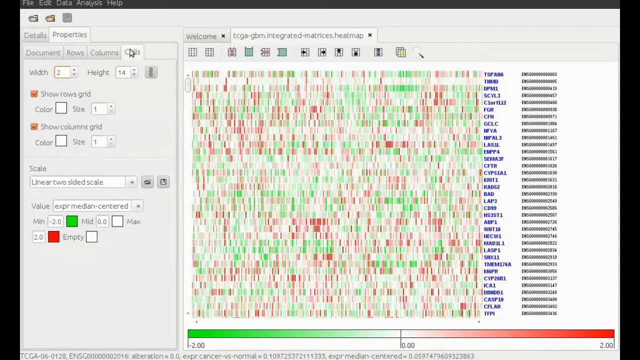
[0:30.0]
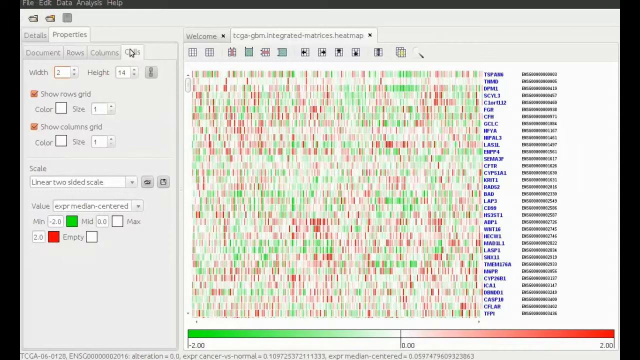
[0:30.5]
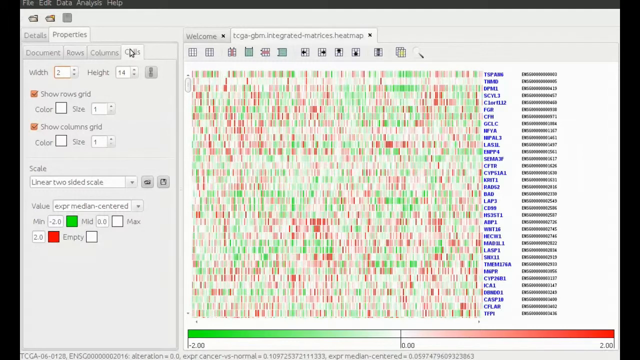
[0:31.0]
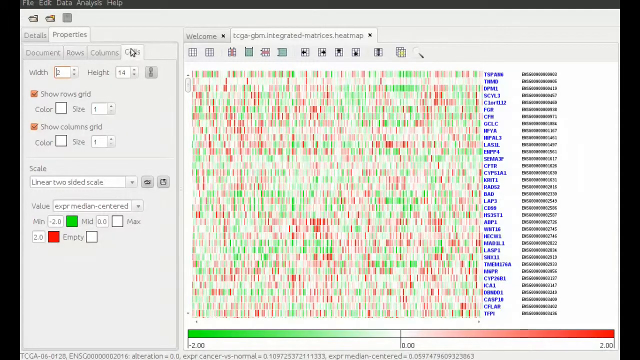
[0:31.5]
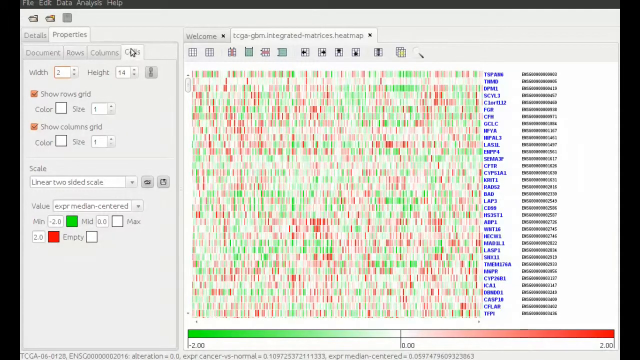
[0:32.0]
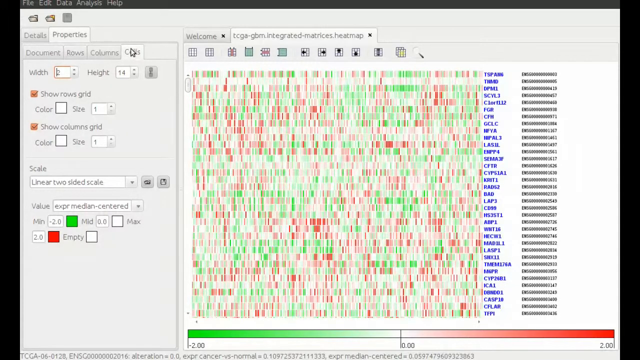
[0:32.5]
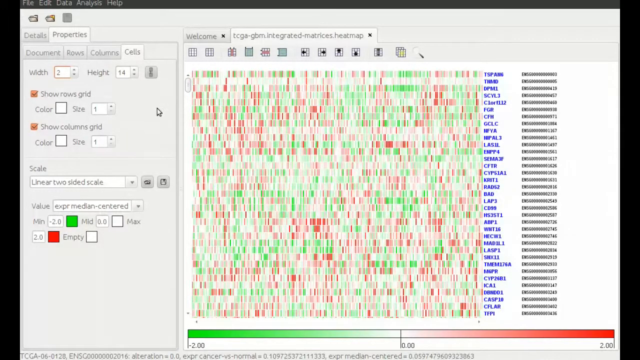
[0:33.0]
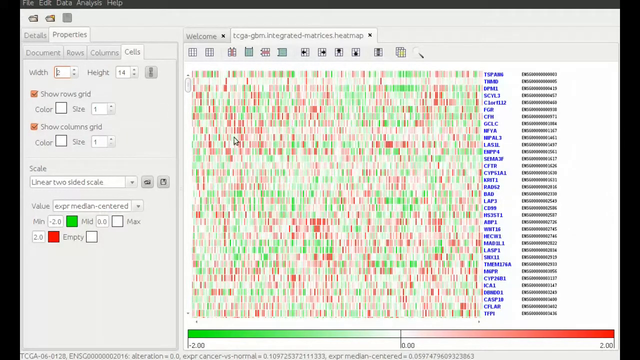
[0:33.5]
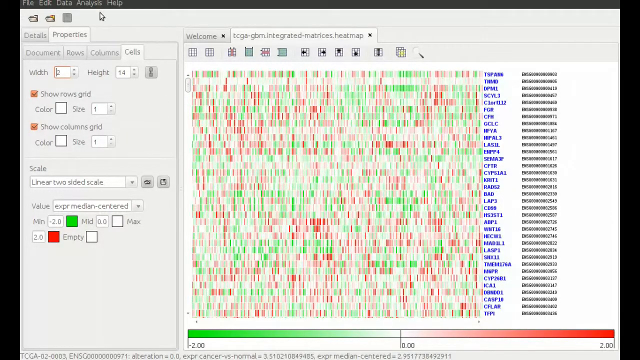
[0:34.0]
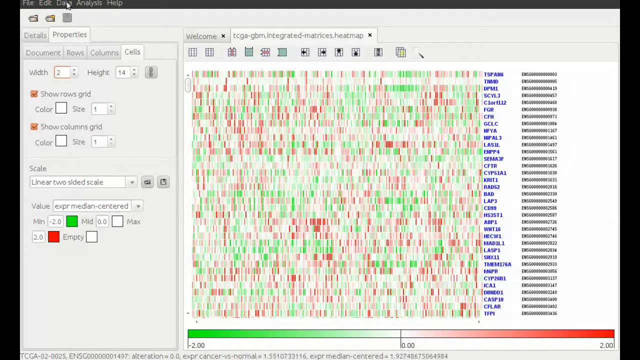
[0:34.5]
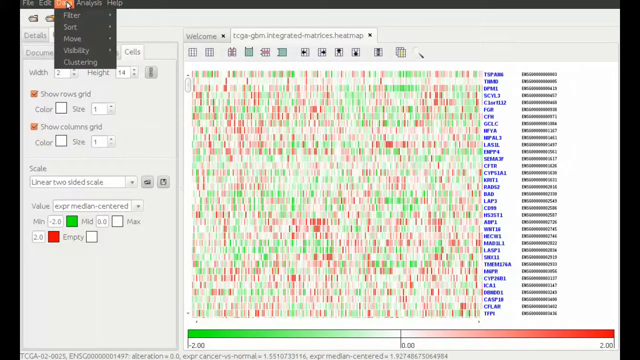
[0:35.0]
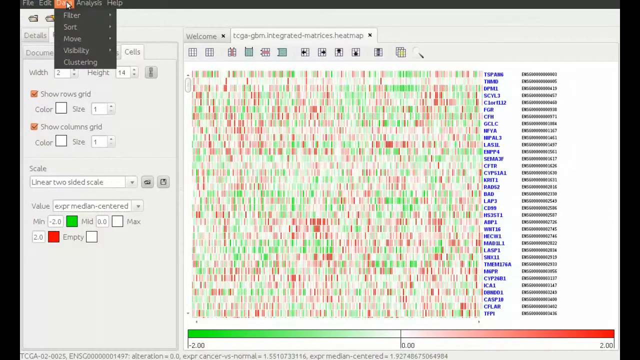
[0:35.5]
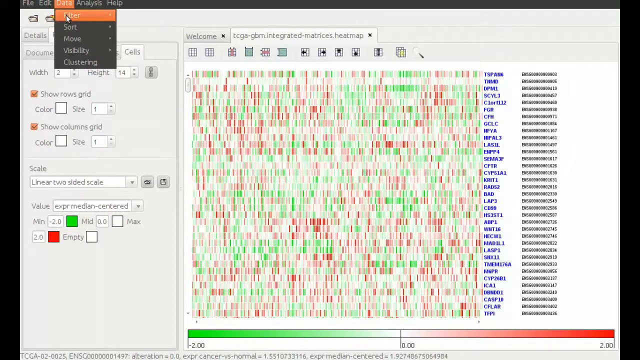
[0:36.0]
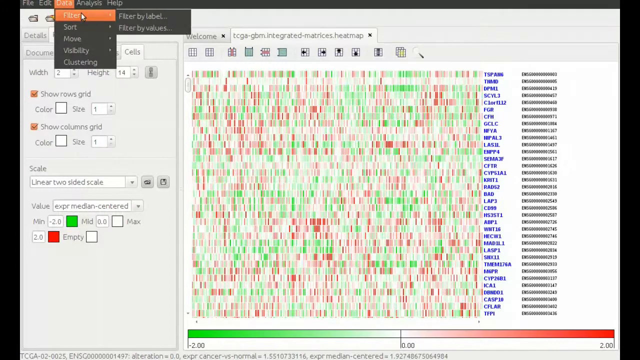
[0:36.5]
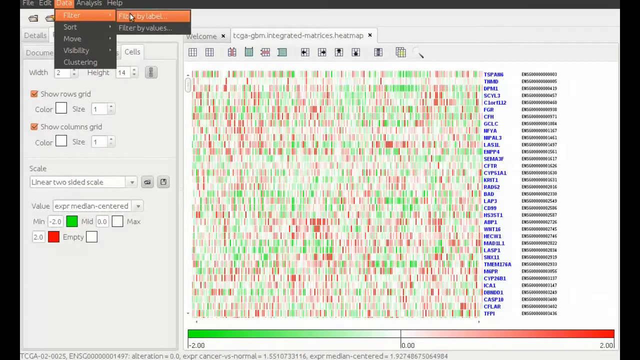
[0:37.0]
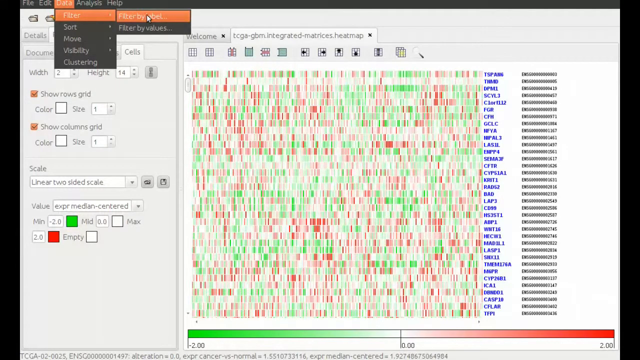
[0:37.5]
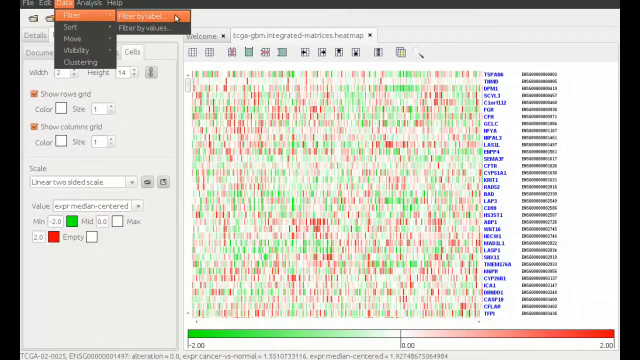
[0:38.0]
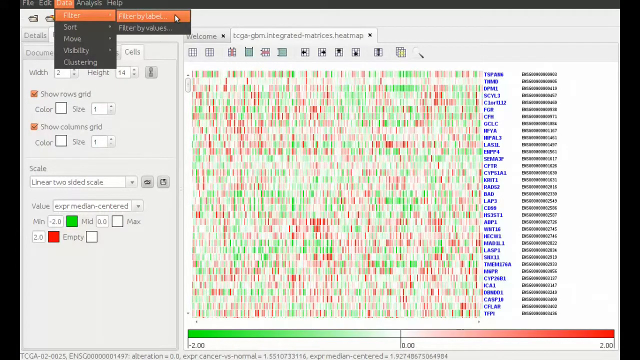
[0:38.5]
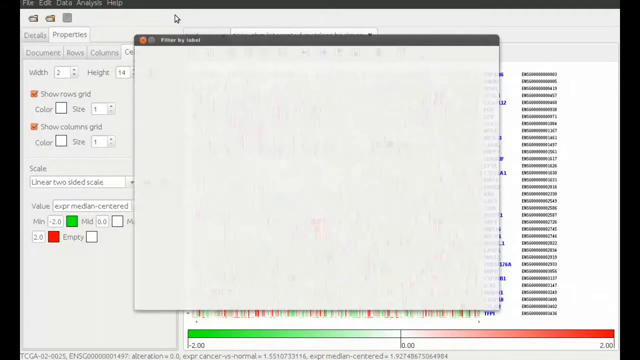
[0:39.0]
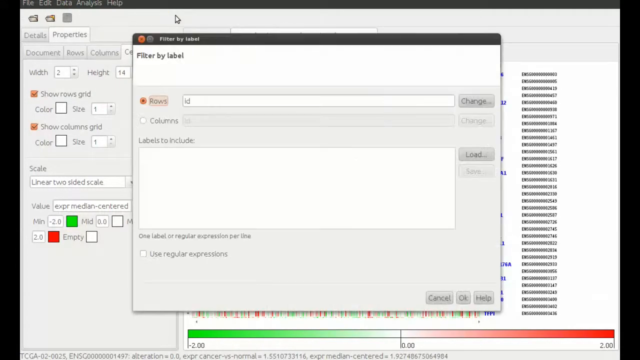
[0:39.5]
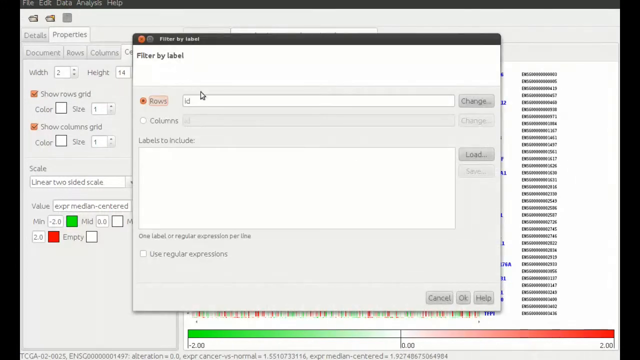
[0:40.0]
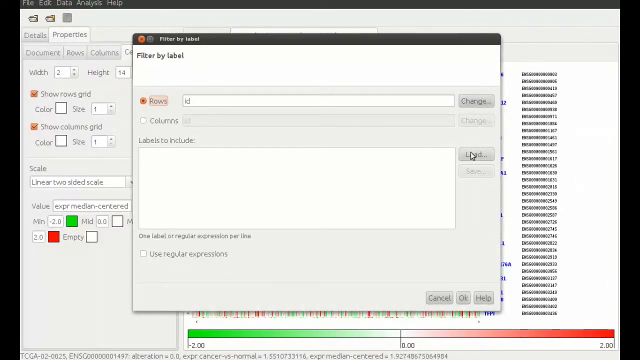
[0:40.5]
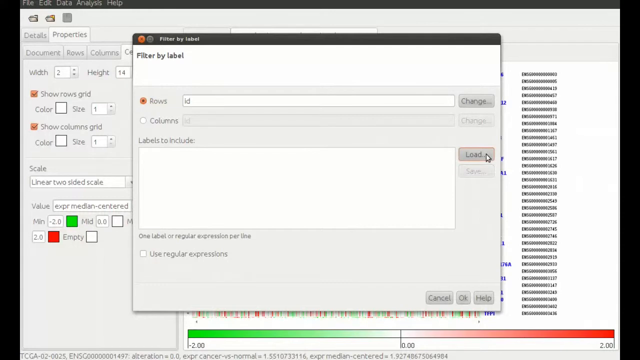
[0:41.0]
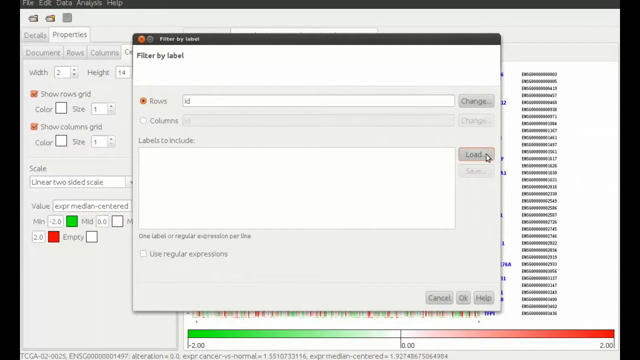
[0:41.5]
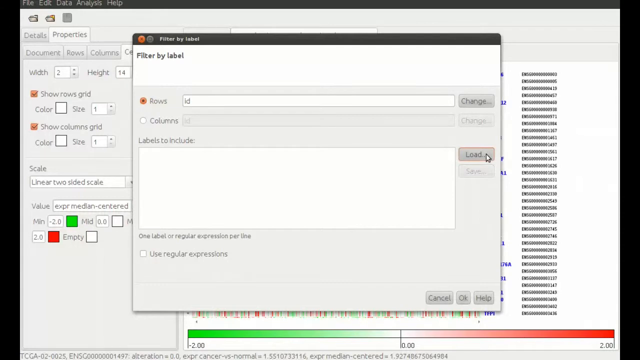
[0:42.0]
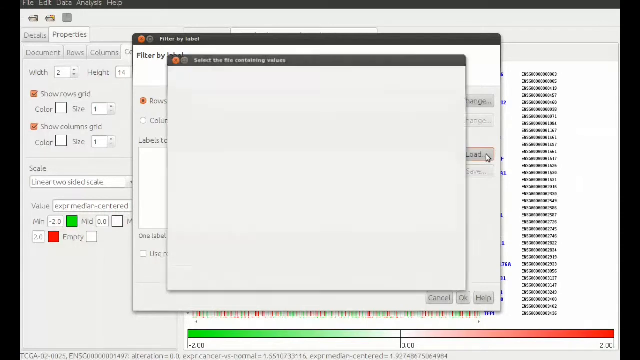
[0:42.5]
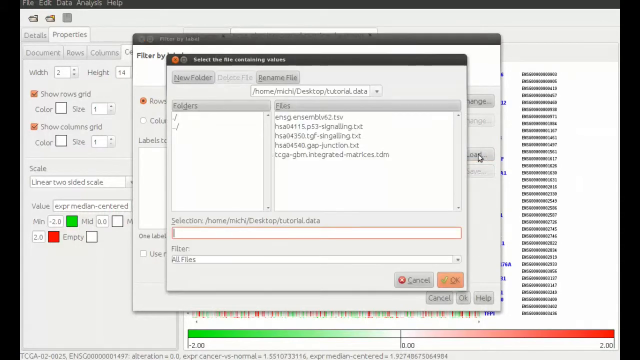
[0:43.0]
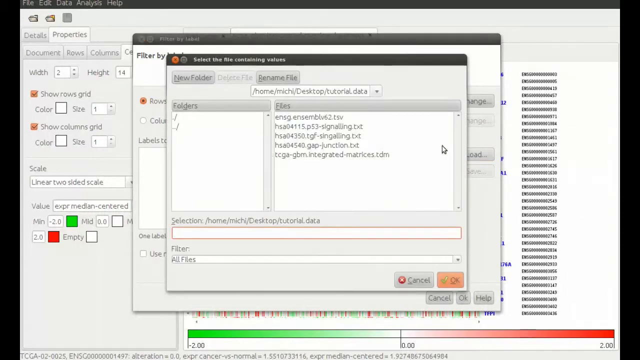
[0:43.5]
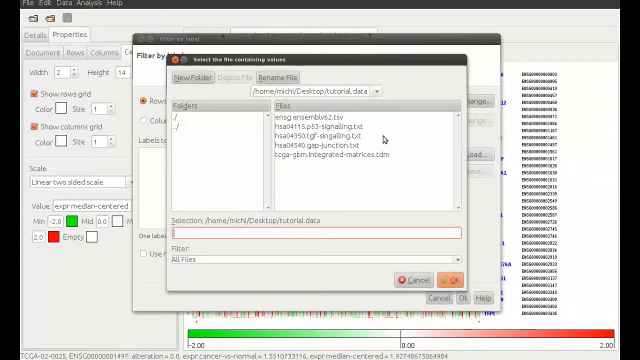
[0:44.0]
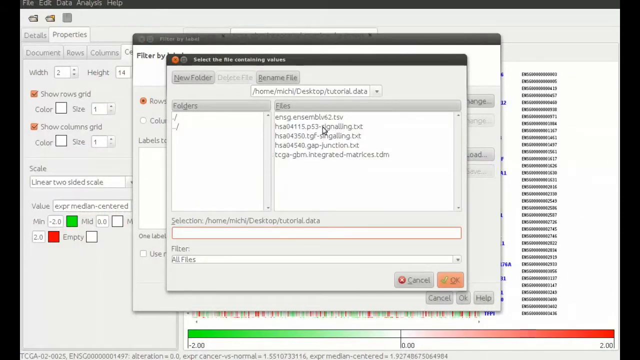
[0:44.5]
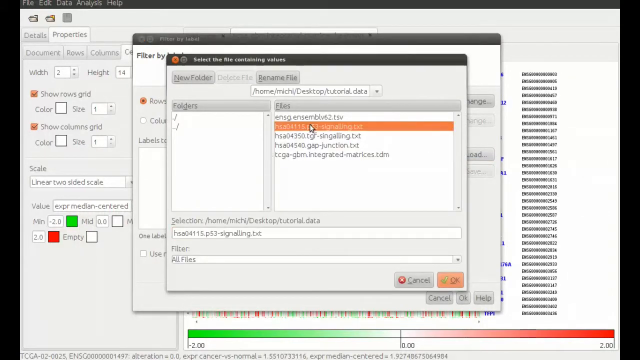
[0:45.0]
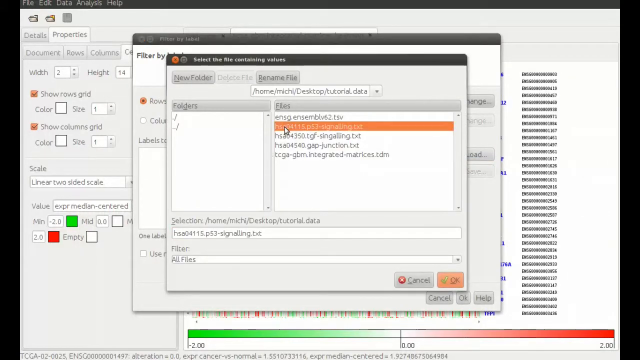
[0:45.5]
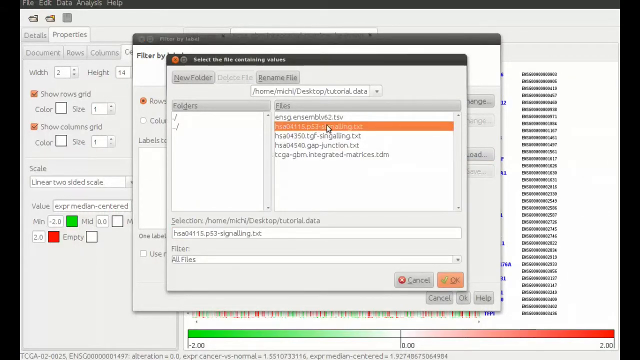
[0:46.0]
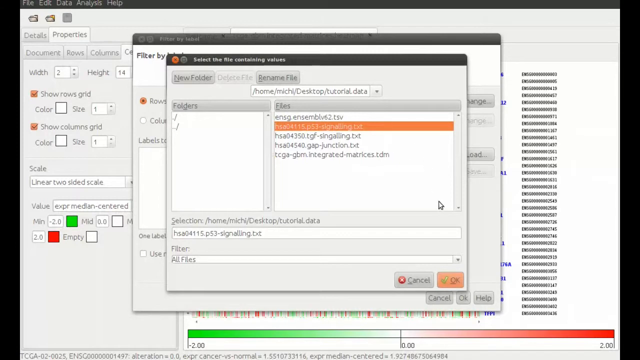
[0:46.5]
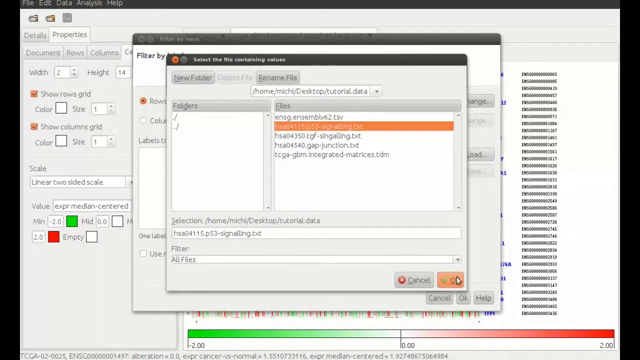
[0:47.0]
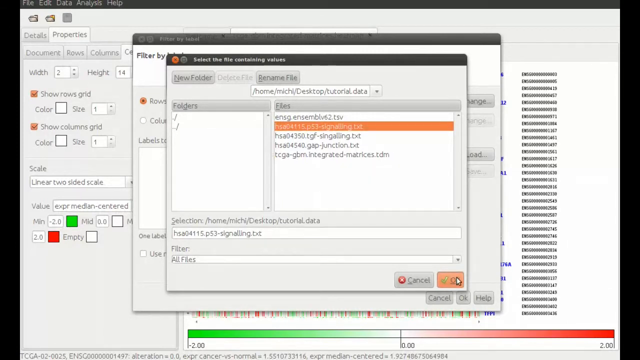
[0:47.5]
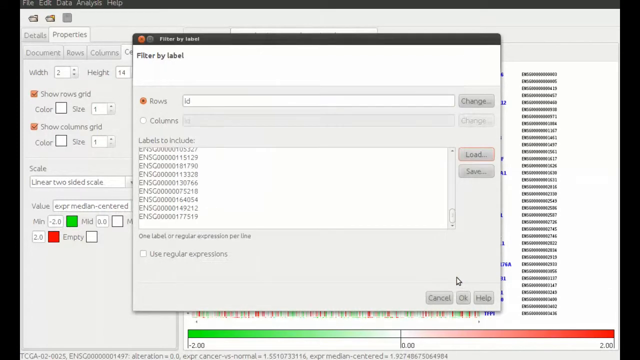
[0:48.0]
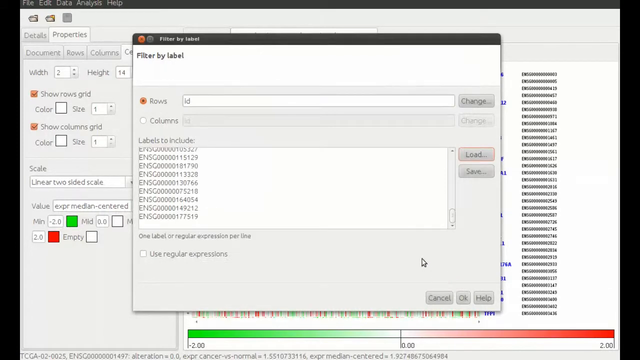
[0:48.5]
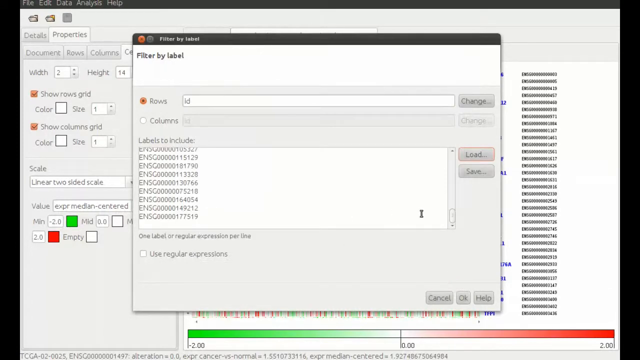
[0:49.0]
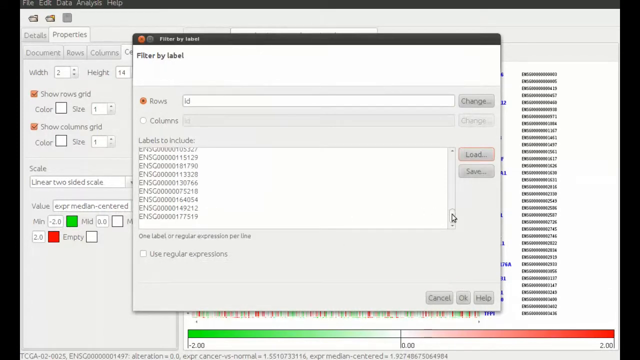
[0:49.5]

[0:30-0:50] In the Gitools window, the user clicks over to the cells tab. Under properties on the left, the width says "2" and the height says "14", and the show rows grid and show columns grid check marks are both checked. The user clicks the data menu option at the top of the screen and goes down to filter, which opens another menu to the right, where they select filter by label. The filter by label window pops up with rows currently selected. The user selects the load button, which opens another window listing a few different files and folders. In the file section on the right, the user selects the second option, the first text file, with the file name "HSA04115.p53-signaling.txt", and clicks OK.